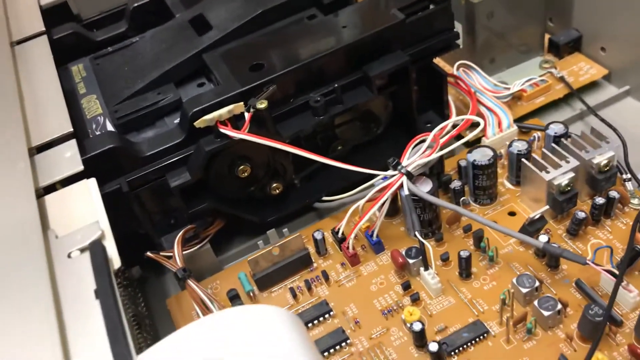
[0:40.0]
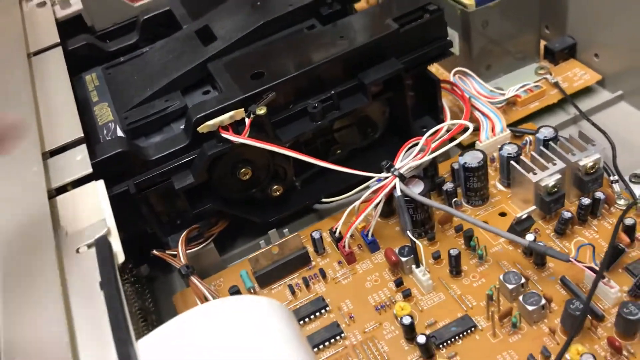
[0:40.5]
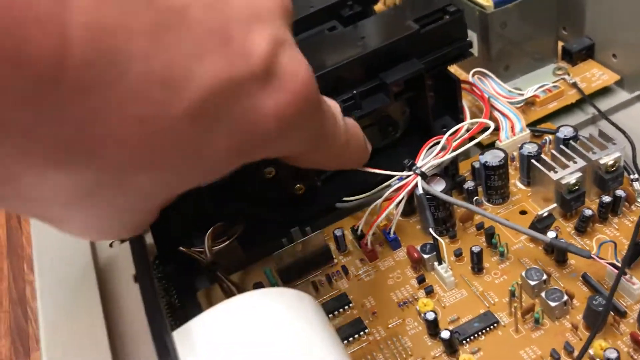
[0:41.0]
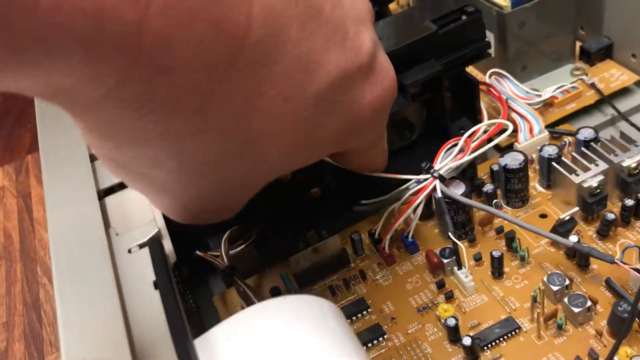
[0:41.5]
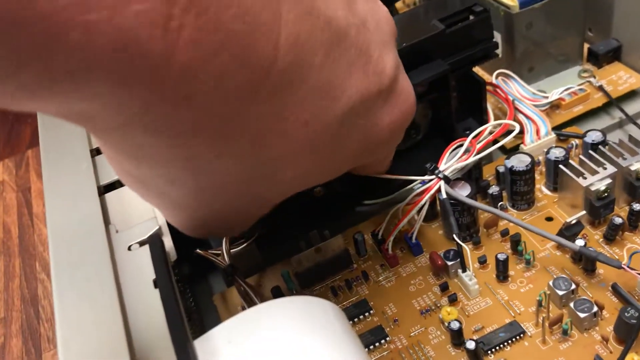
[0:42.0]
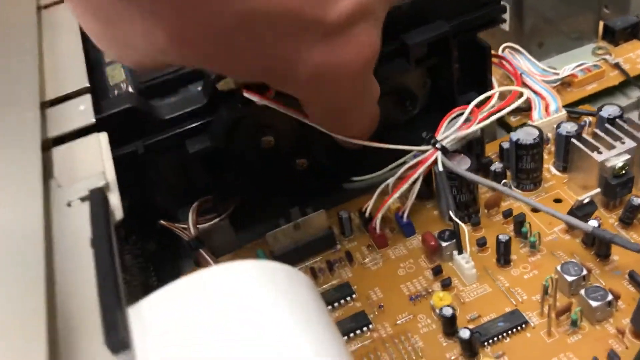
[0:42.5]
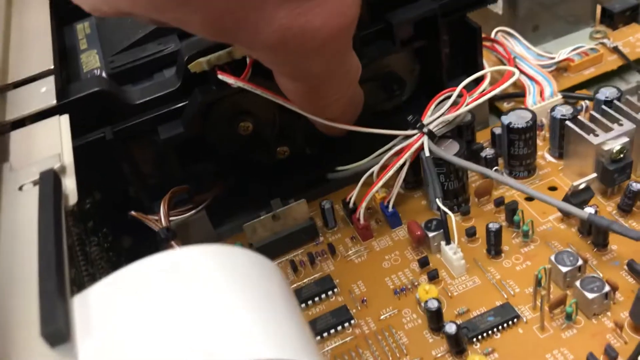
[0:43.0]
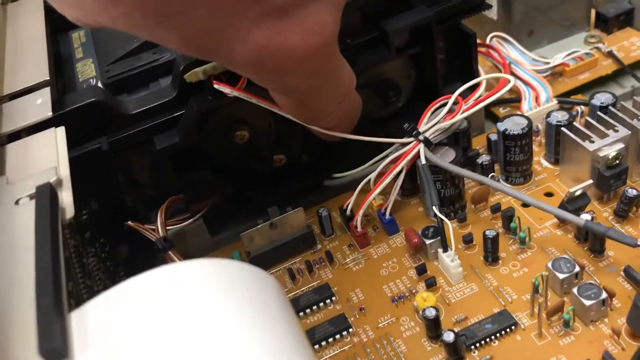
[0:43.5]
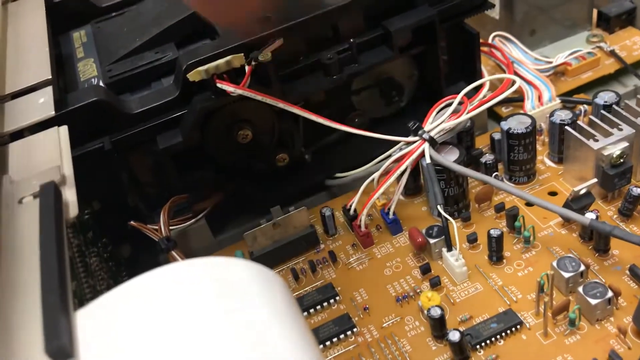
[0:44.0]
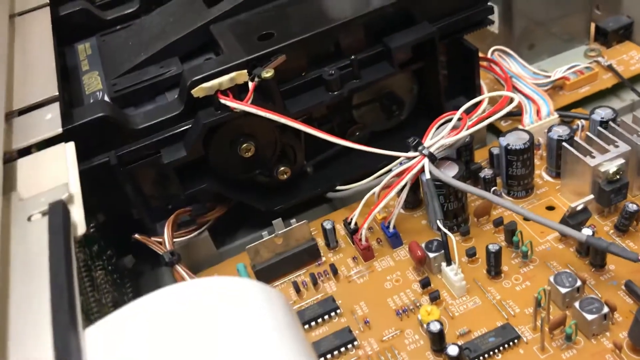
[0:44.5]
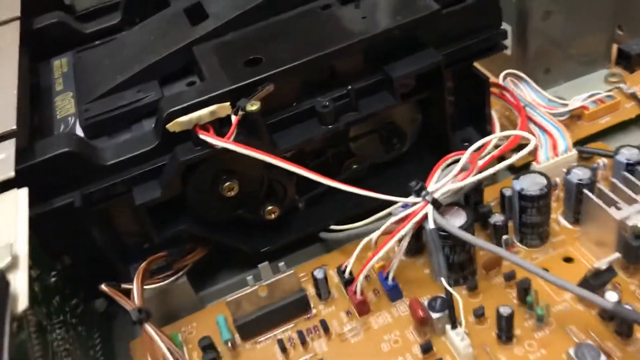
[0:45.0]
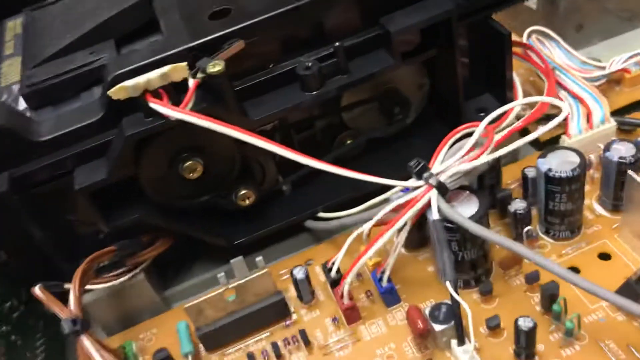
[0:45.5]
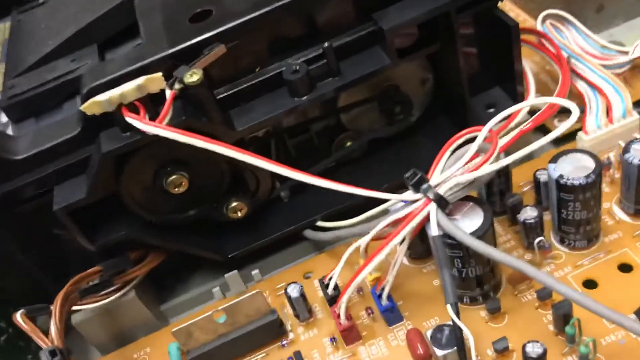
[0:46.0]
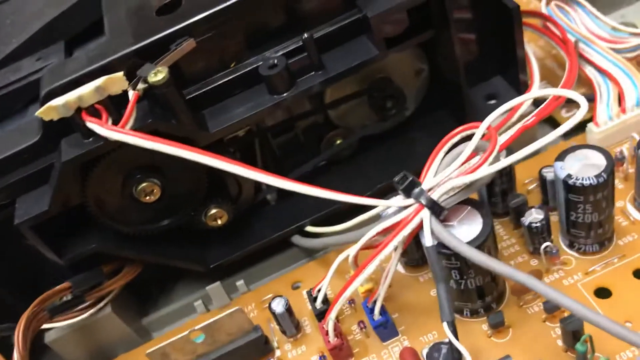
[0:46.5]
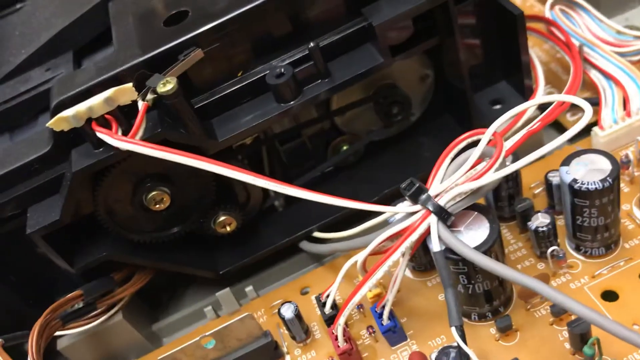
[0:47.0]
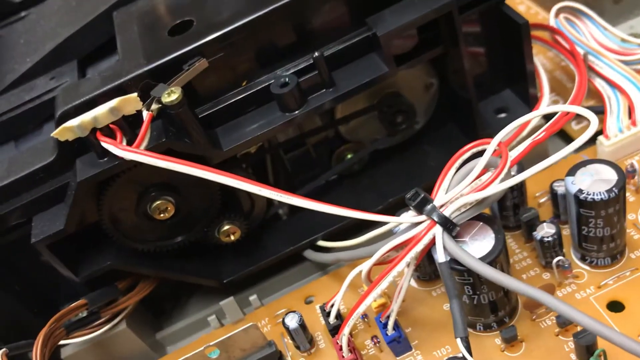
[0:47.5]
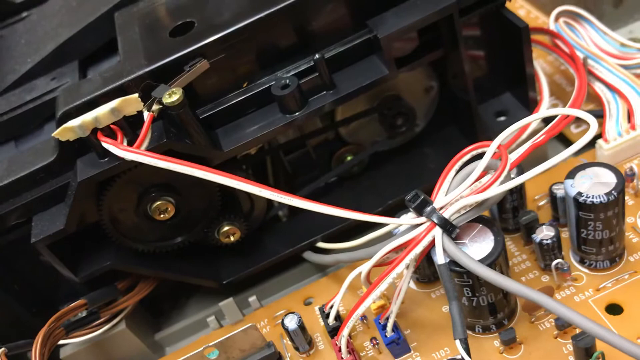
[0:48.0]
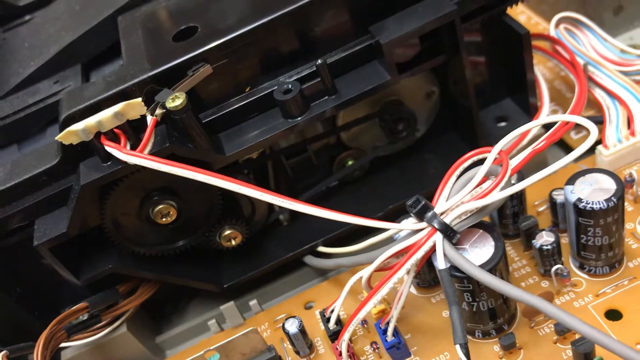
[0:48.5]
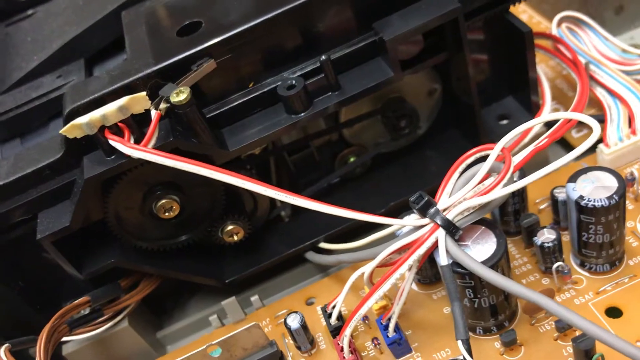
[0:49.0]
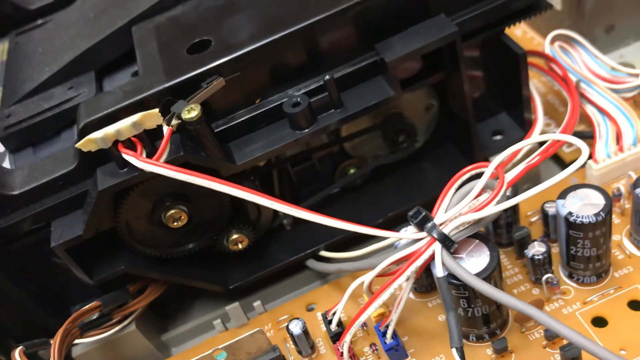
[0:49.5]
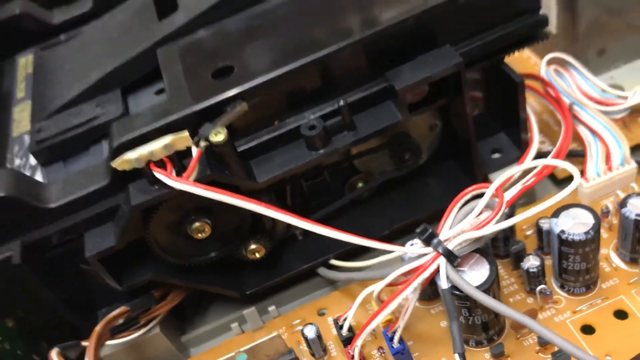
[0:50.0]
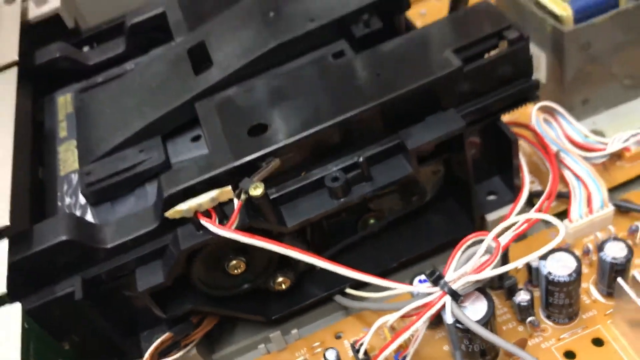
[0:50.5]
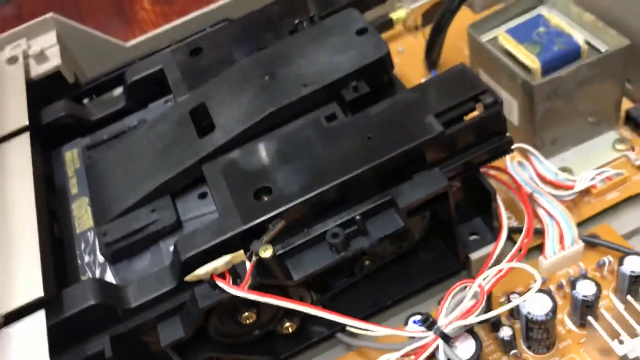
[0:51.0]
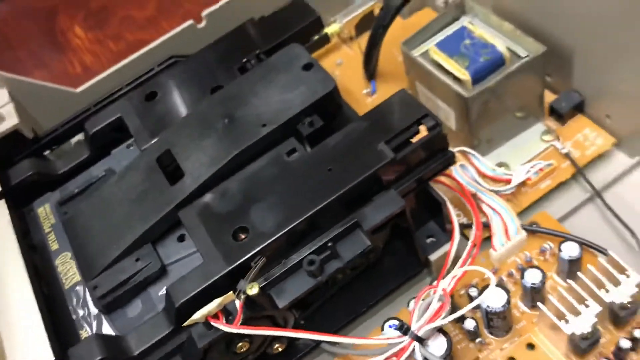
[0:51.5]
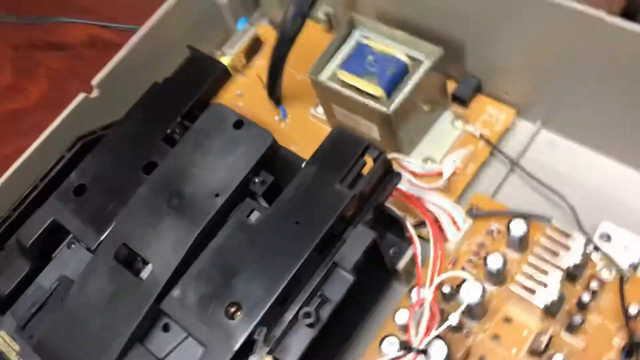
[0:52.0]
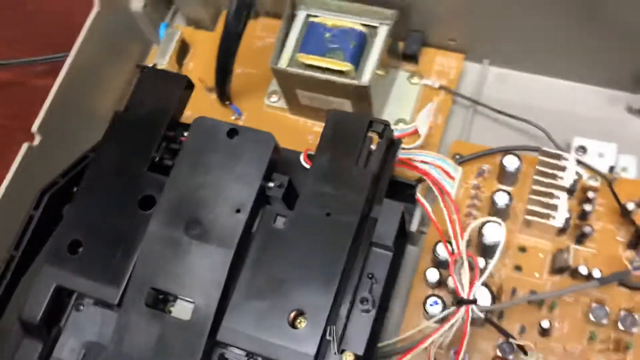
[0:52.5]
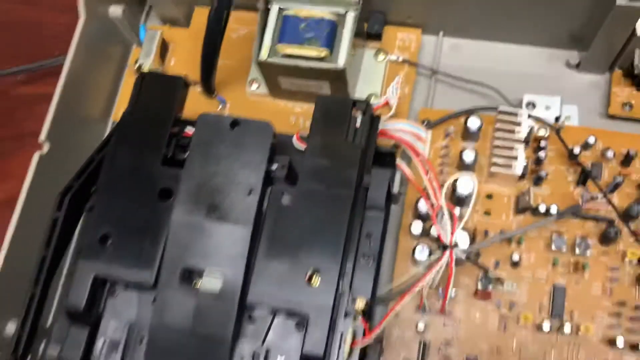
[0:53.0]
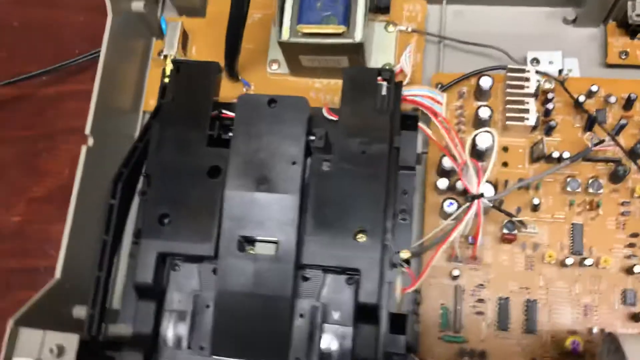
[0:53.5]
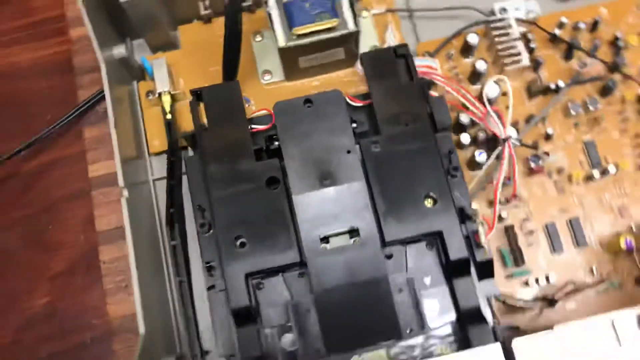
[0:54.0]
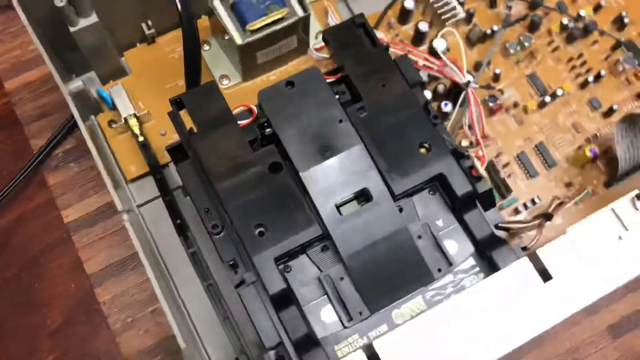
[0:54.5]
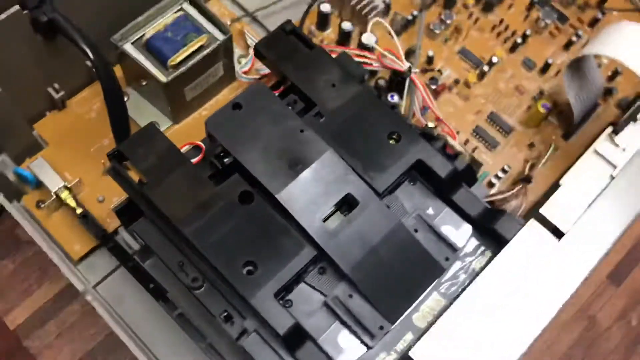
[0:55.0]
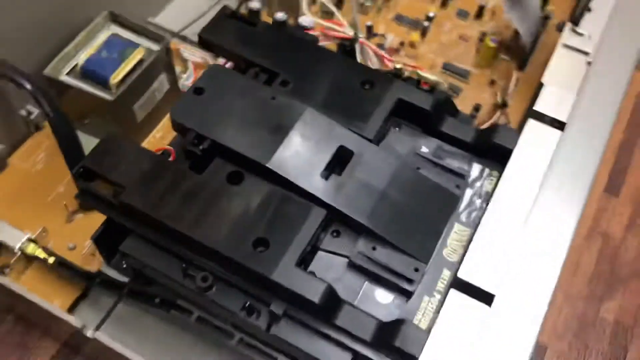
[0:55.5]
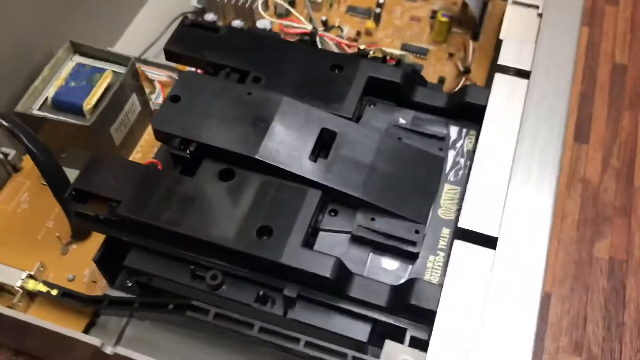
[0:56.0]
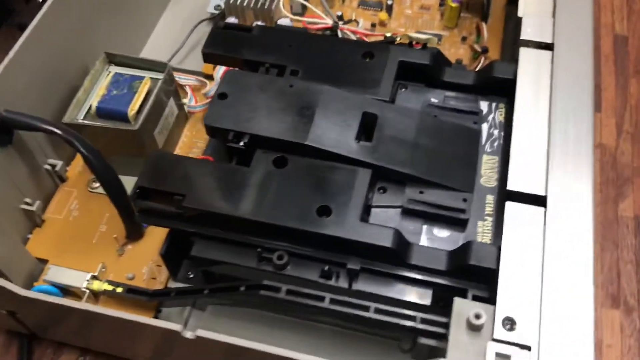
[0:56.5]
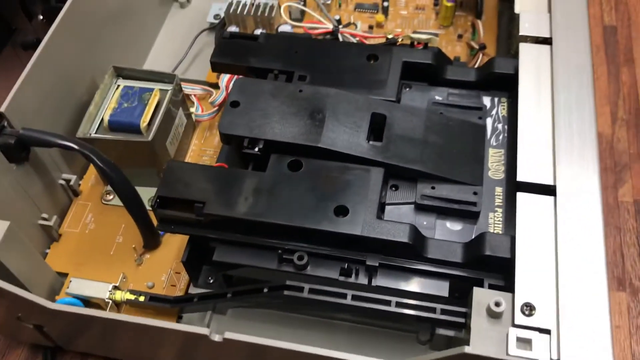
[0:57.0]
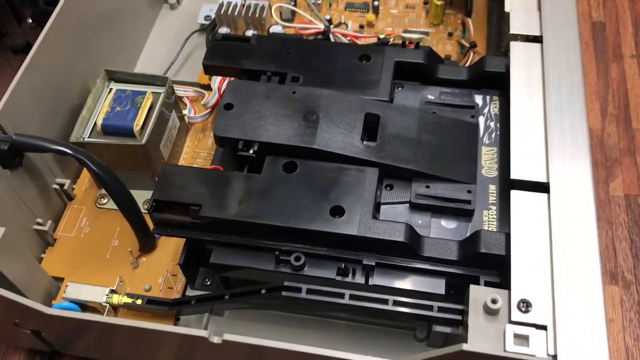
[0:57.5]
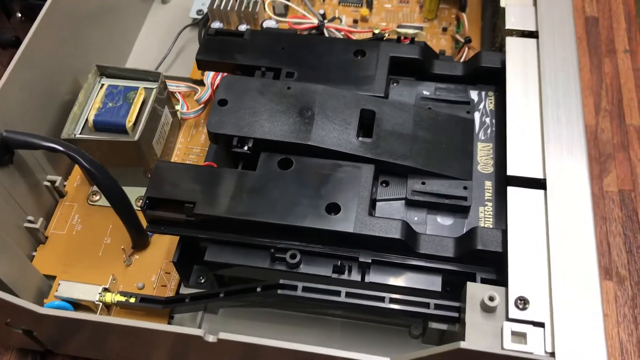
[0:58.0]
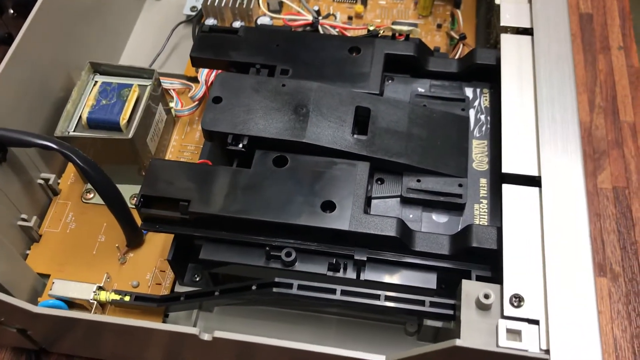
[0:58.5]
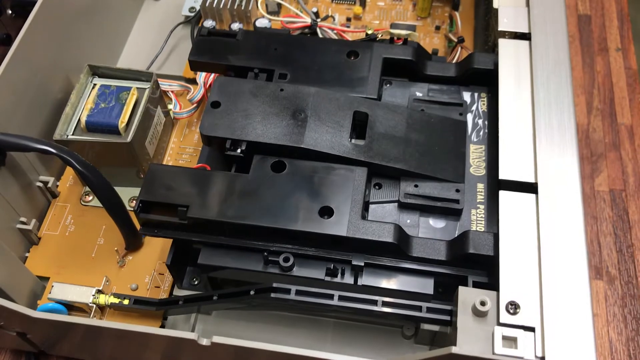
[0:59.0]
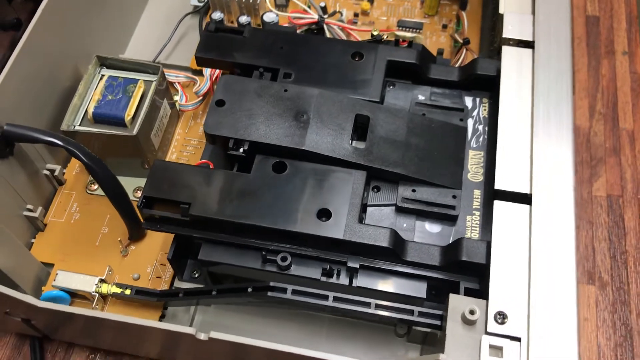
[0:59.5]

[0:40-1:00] What is perhaps a single hand goes to the open machine and presses something on the cables, which are grouped together and come across the screen.